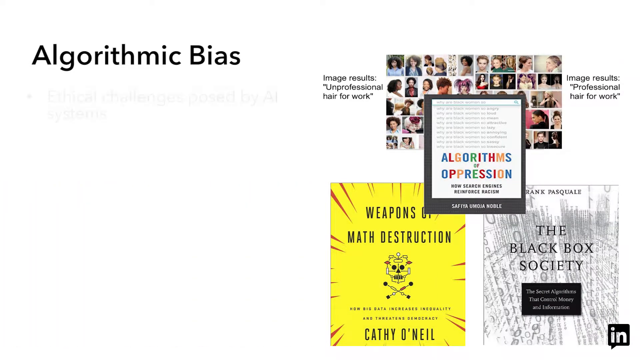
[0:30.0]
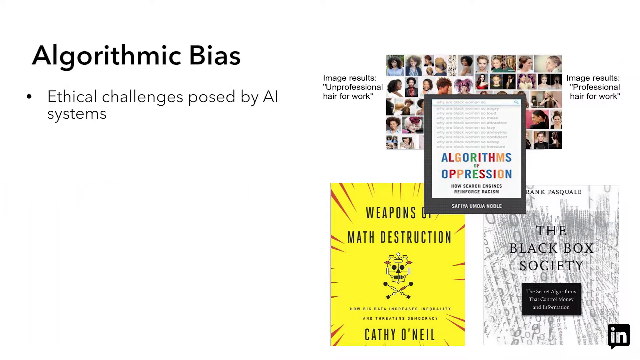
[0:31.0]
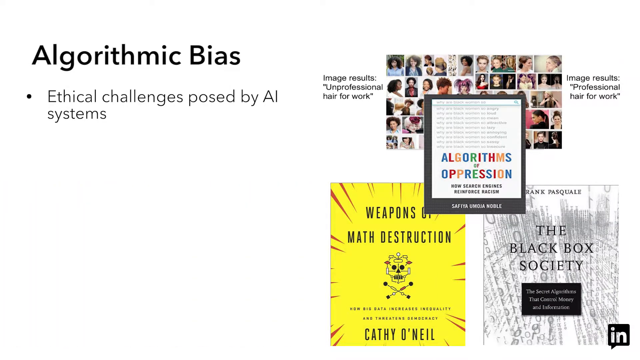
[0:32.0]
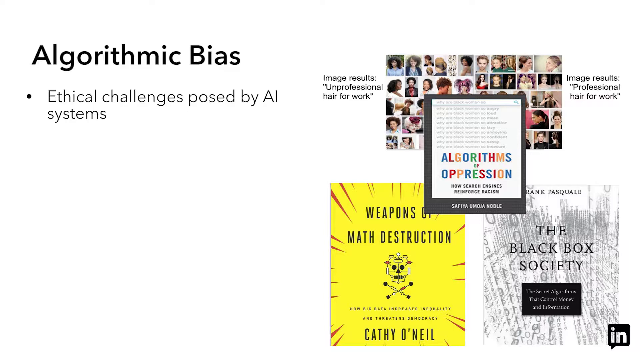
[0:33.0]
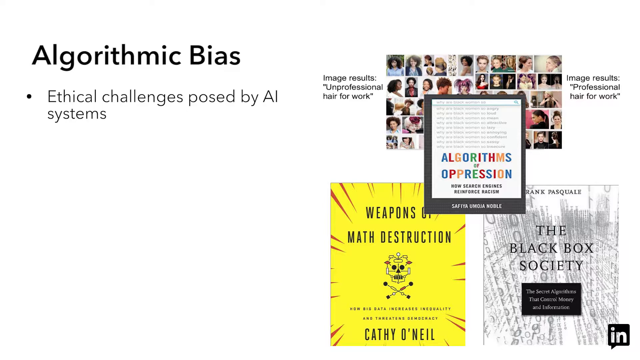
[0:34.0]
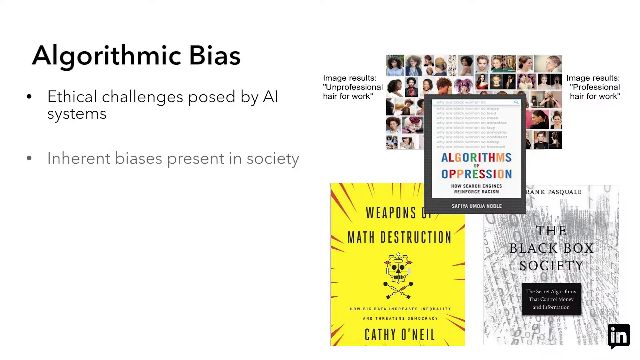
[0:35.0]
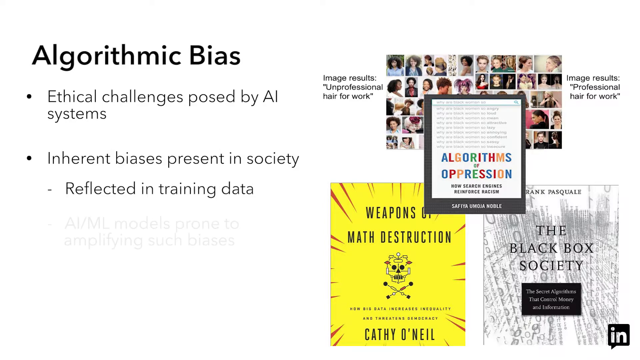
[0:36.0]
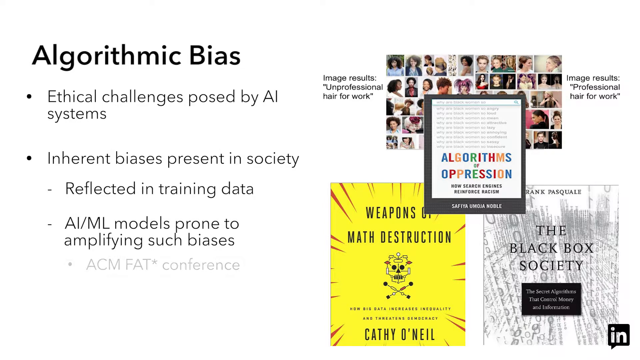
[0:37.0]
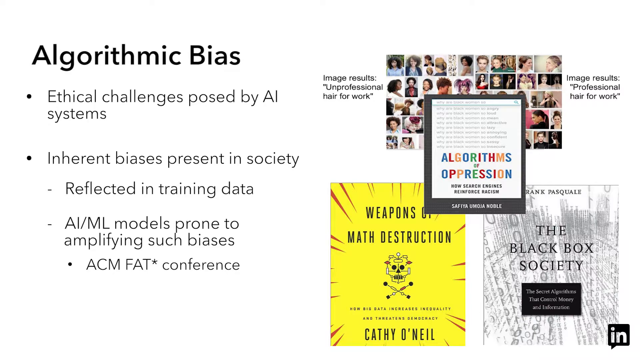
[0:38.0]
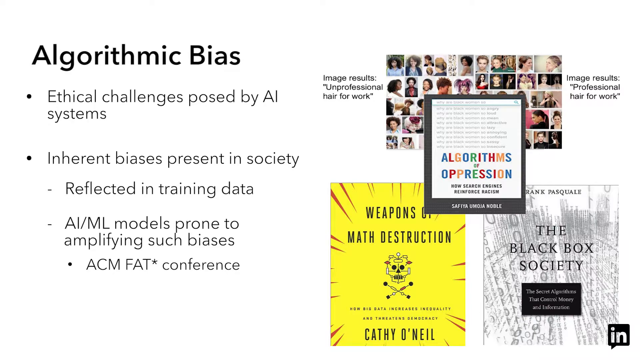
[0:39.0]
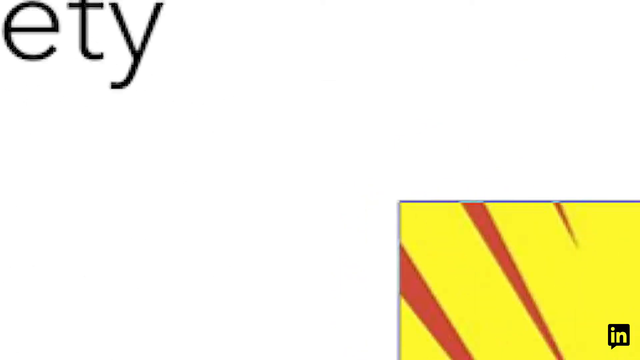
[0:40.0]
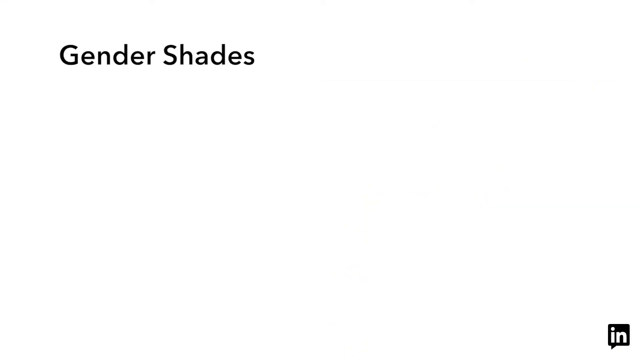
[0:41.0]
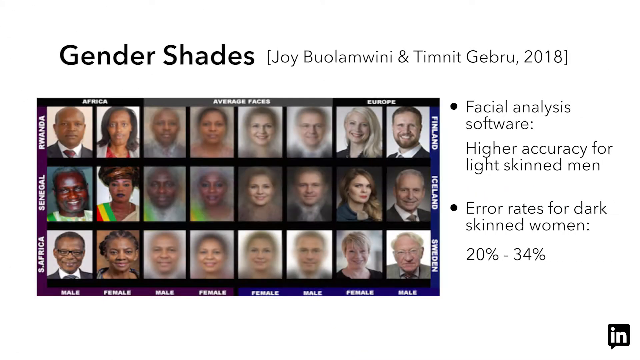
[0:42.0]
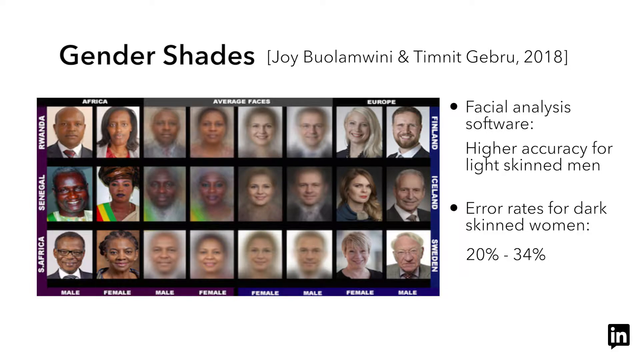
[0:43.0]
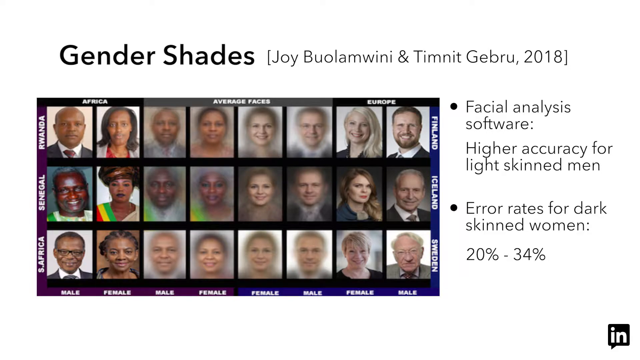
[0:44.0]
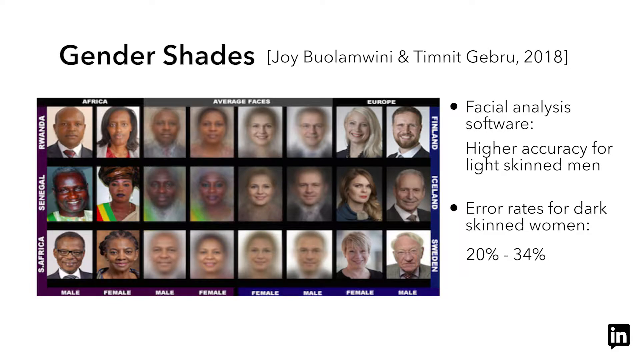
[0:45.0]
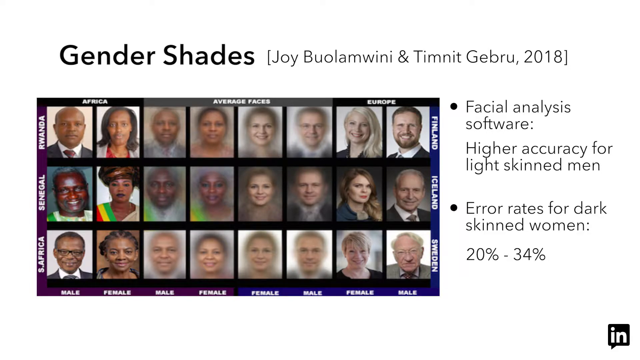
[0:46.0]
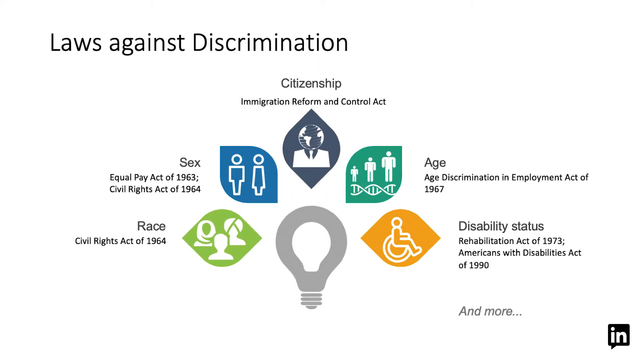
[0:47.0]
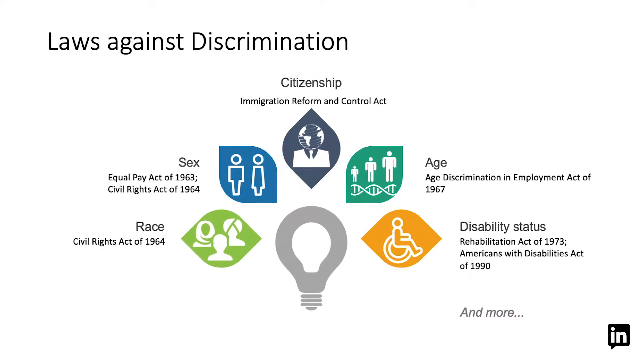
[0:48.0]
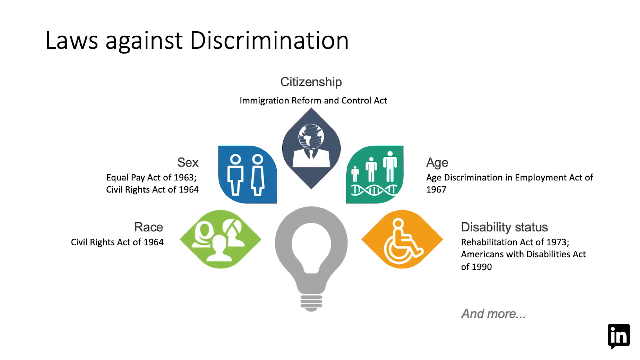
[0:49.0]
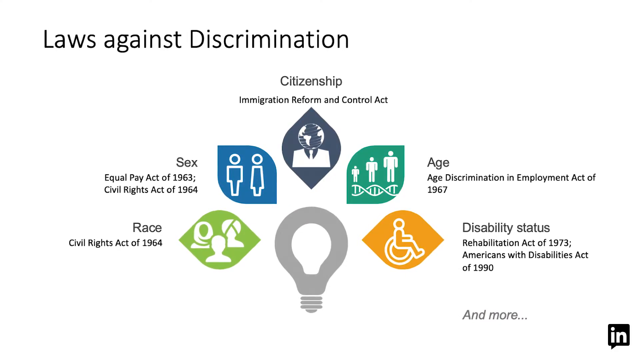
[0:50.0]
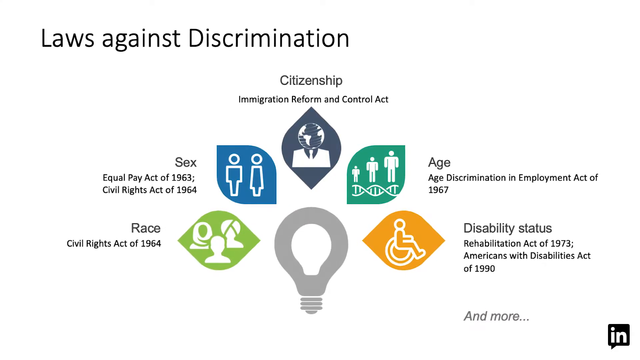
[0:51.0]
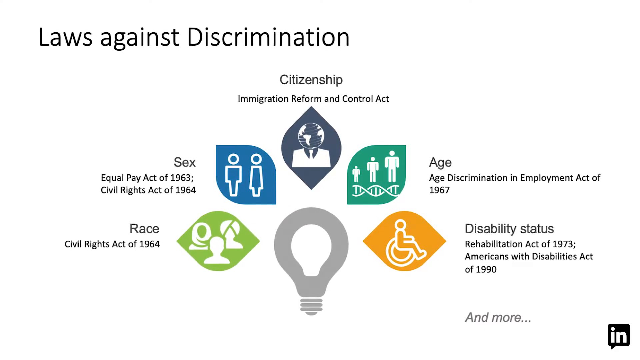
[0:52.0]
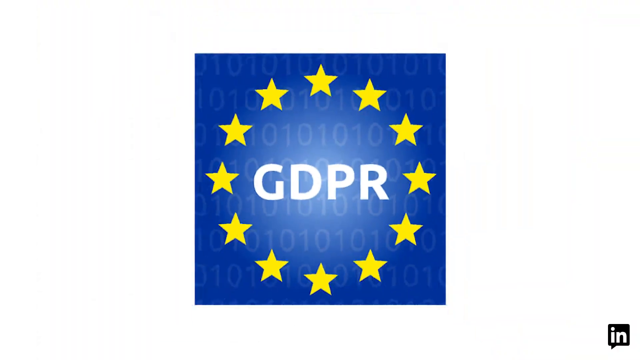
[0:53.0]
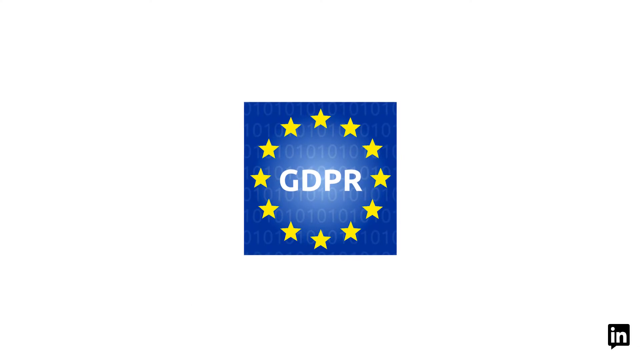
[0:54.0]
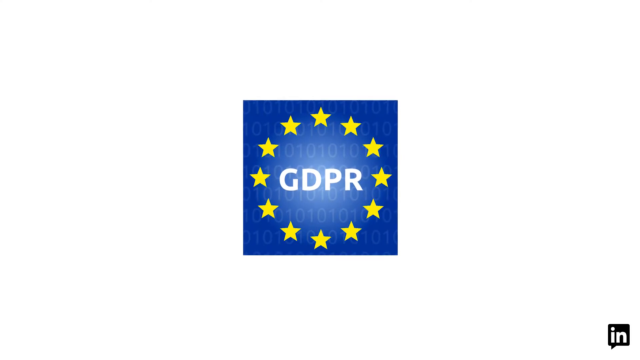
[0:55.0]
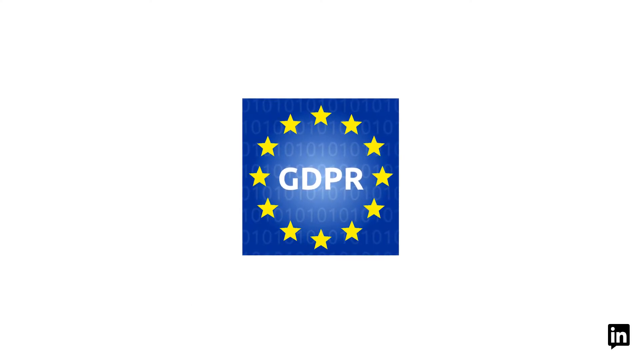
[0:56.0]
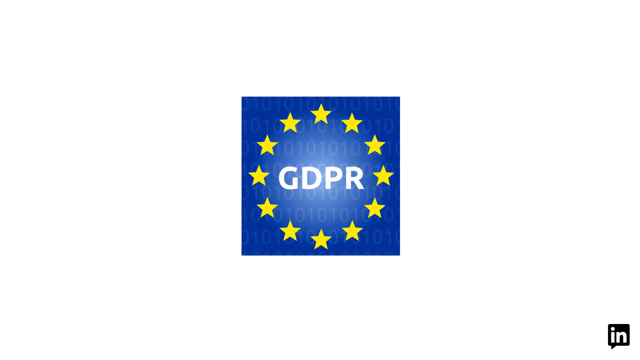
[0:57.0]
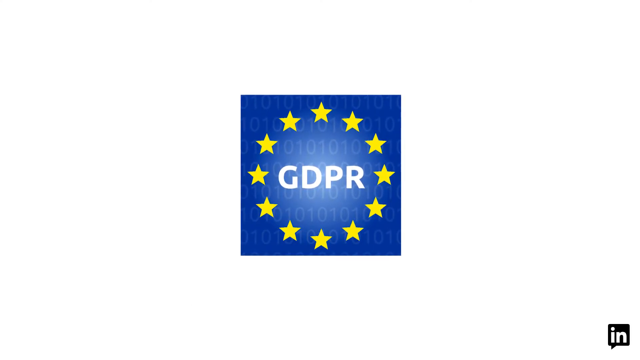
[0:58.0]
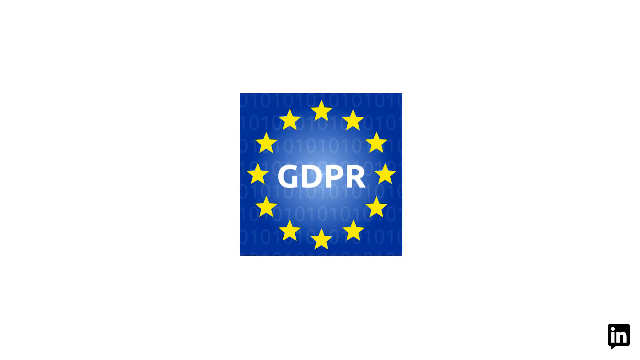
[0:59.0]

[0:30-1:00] A slide titled "algorithmic bias" has a point beneath it reading "ethical challenges posed by AI systems". On the right side appear what look like book titles: "Algorithms of Oppression", "Weapons of Mass Destruction" and "The Black Box Society". There are also what look like search result images, with the prompt "image results unprofessional hair for work" on the left and "image results professional hair for work" on the right. Further bullet points read "inherit biases present in society", with sub-points "reflected in training data" and "AI ML models prone to amplifying such biases", and a further sub-point referring to an ACM conference, marked with an asterisk. The slide then transitions to a "gender shades" slide reading "Joy Bulwamni and Timit Jebru 2018". It shows facial analysis software with higher accuracy for light-skinned men, states that error rates for dark-skinned women are 20 percent to 34 percent, and has a kind of scale of African men and white women.